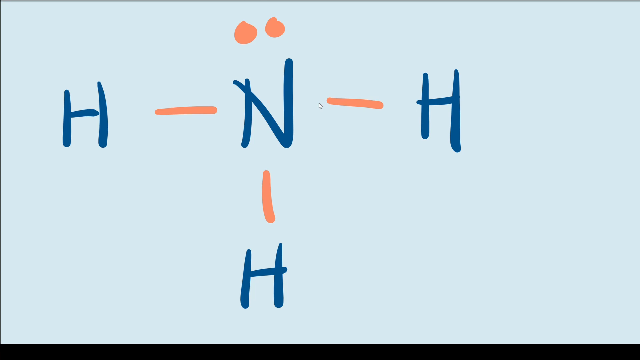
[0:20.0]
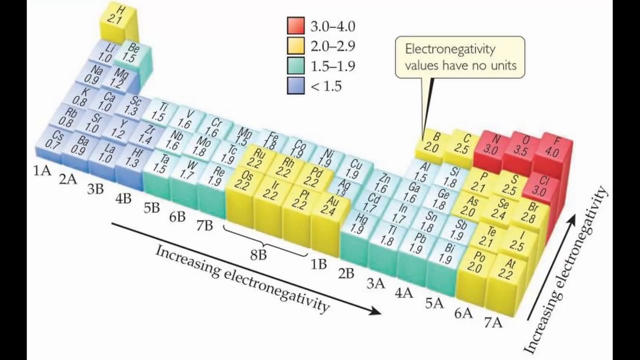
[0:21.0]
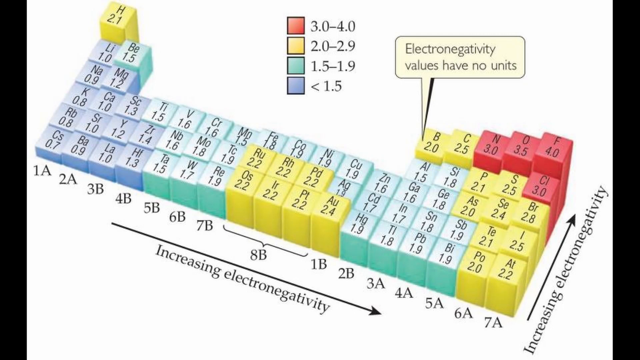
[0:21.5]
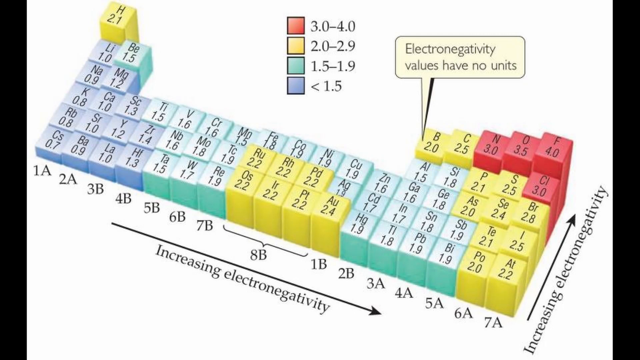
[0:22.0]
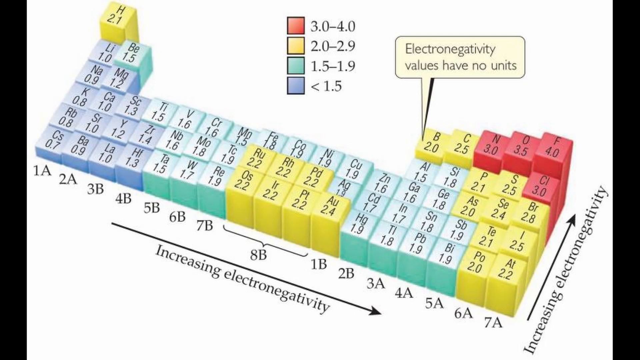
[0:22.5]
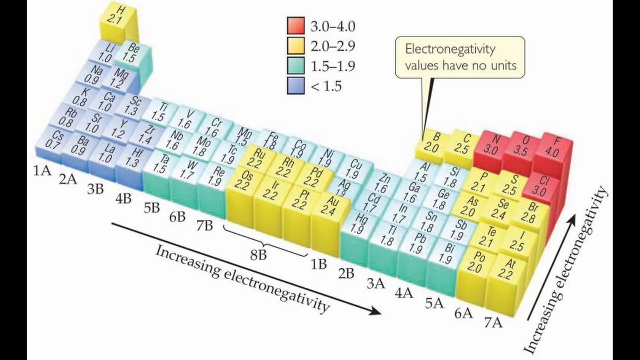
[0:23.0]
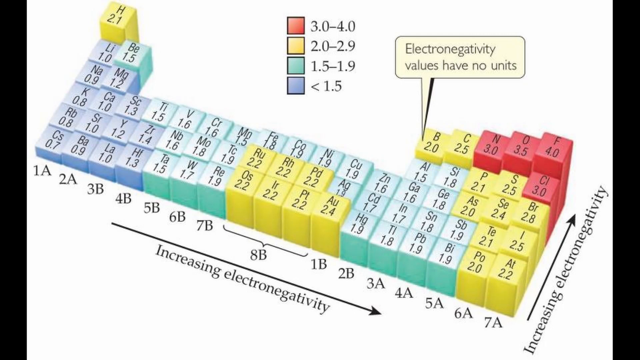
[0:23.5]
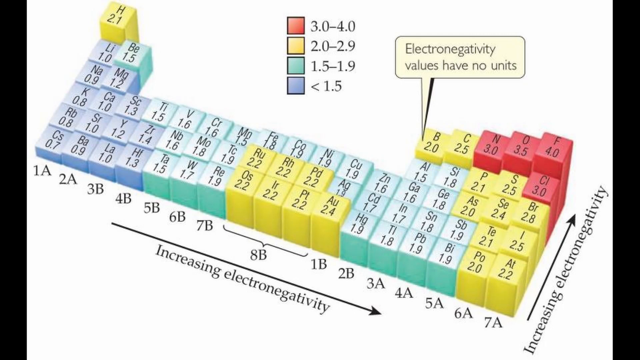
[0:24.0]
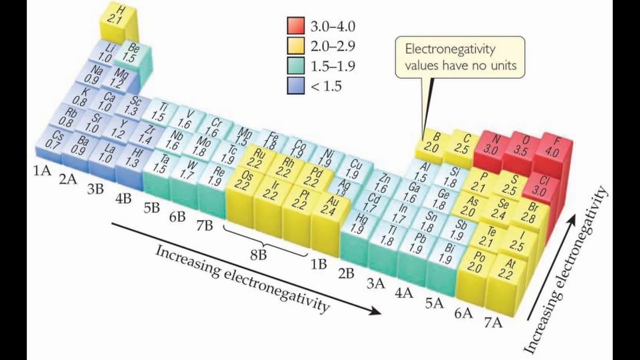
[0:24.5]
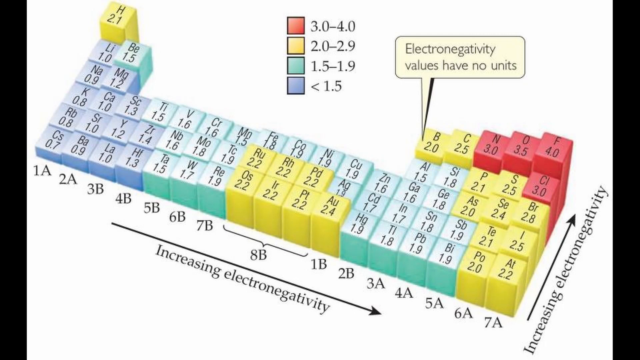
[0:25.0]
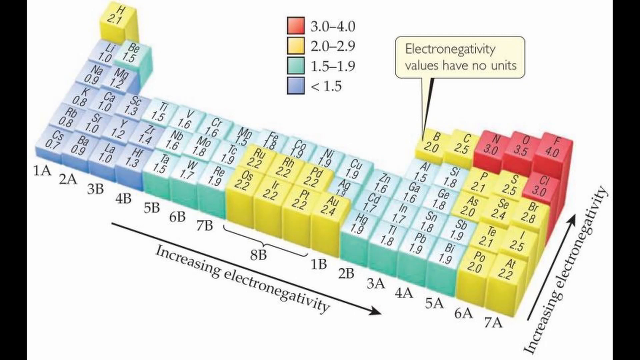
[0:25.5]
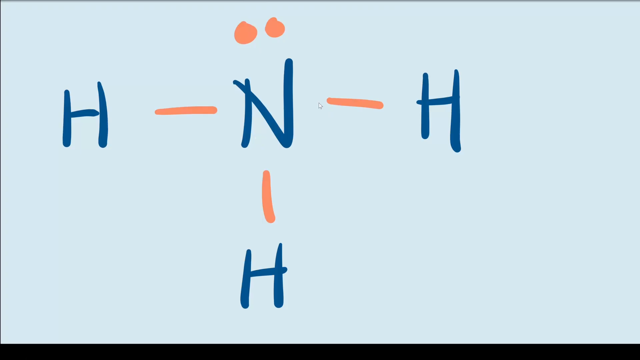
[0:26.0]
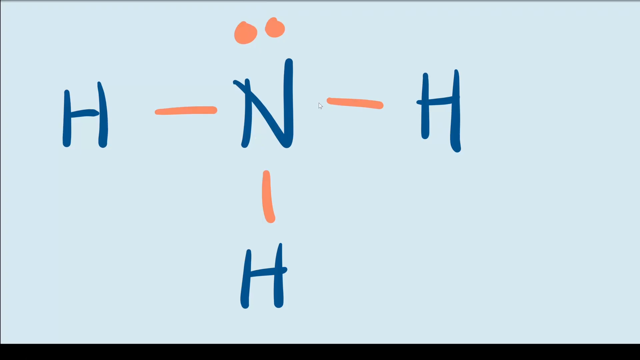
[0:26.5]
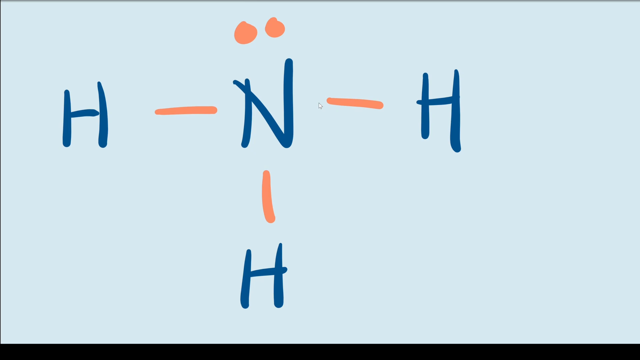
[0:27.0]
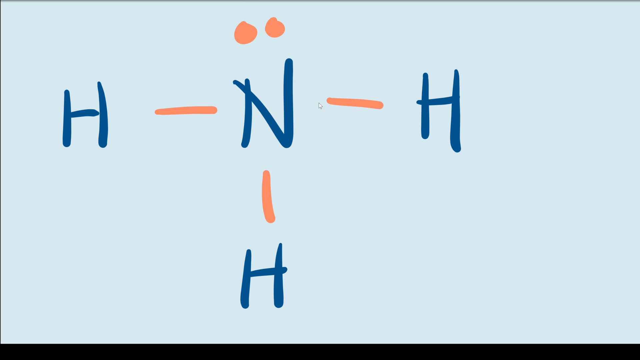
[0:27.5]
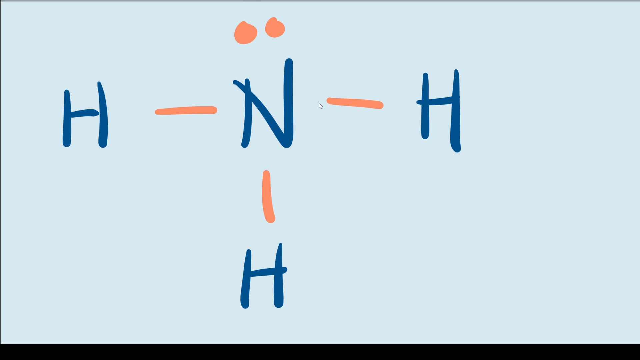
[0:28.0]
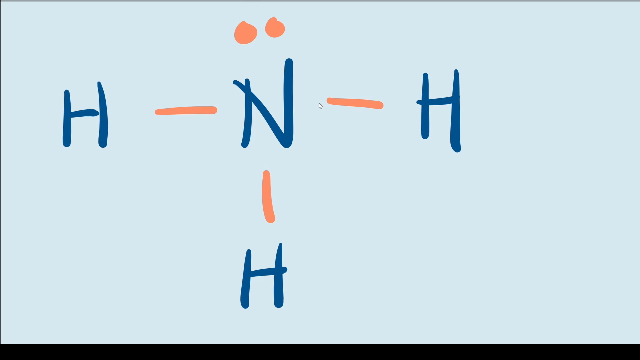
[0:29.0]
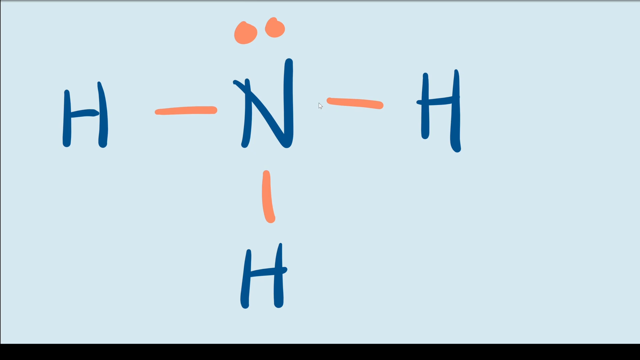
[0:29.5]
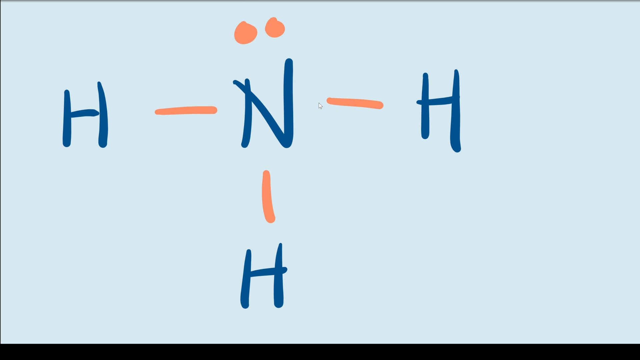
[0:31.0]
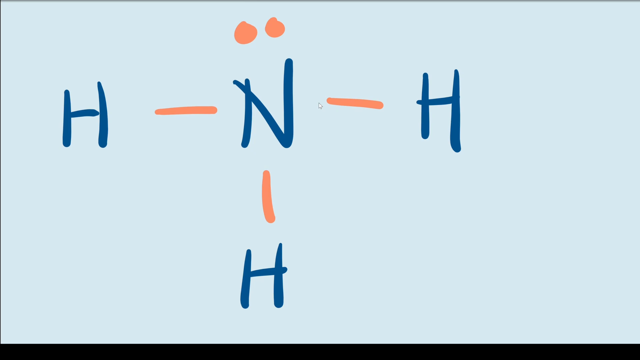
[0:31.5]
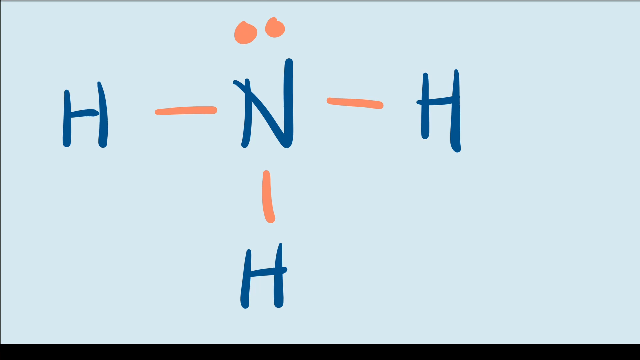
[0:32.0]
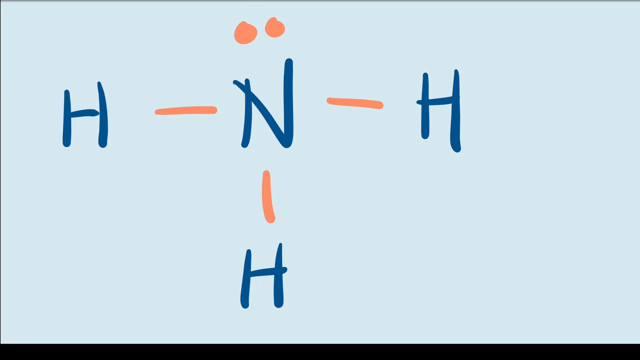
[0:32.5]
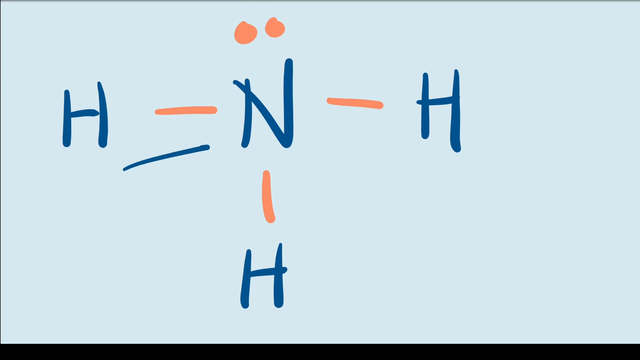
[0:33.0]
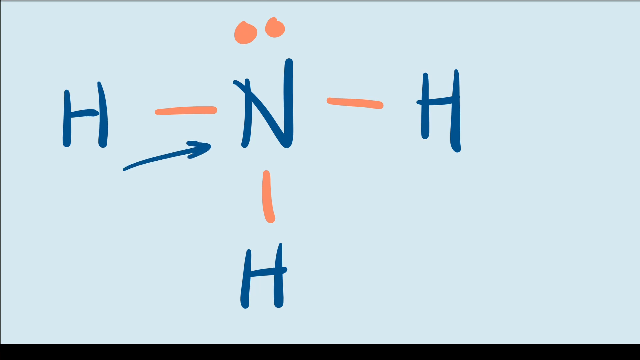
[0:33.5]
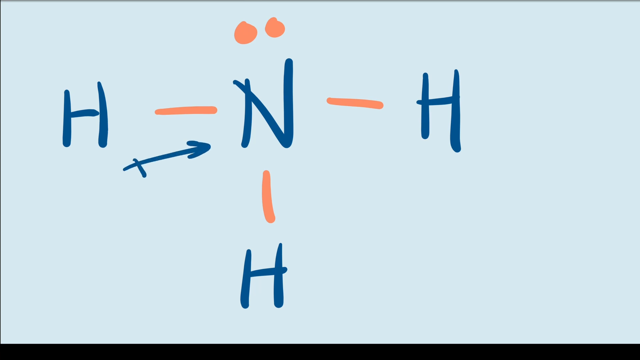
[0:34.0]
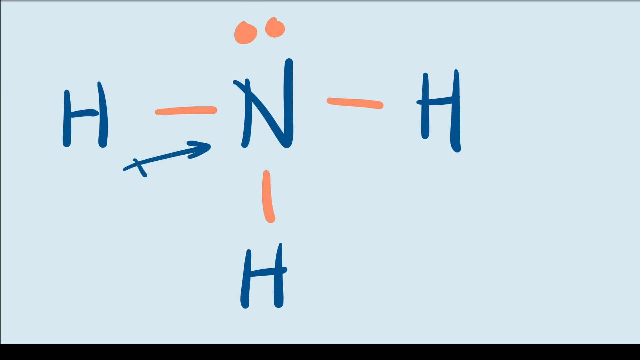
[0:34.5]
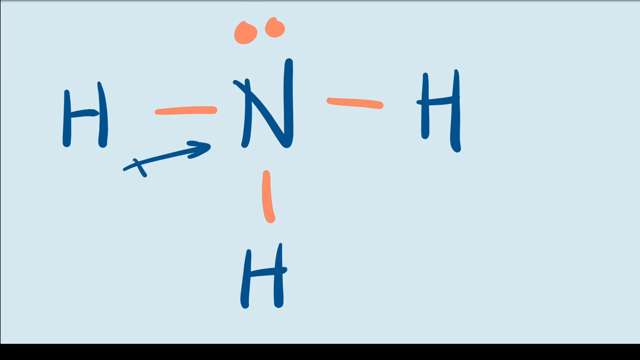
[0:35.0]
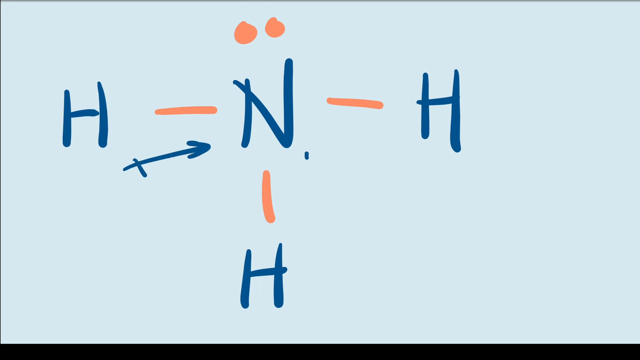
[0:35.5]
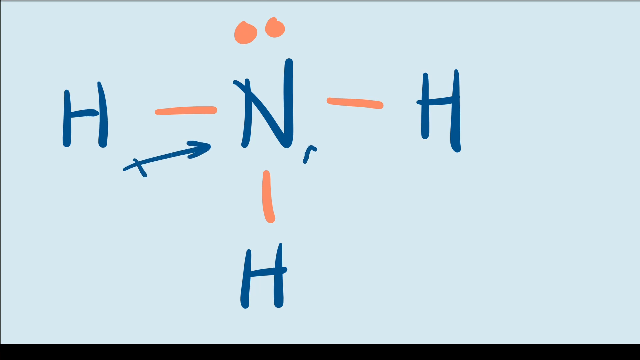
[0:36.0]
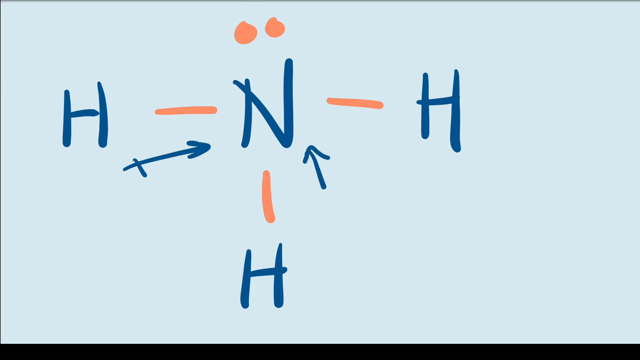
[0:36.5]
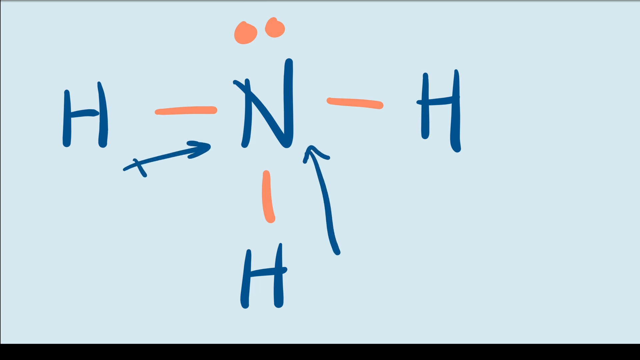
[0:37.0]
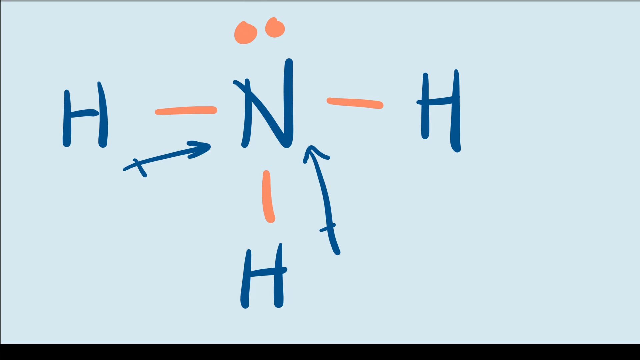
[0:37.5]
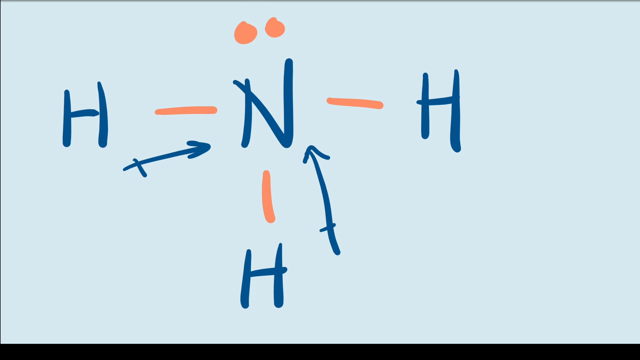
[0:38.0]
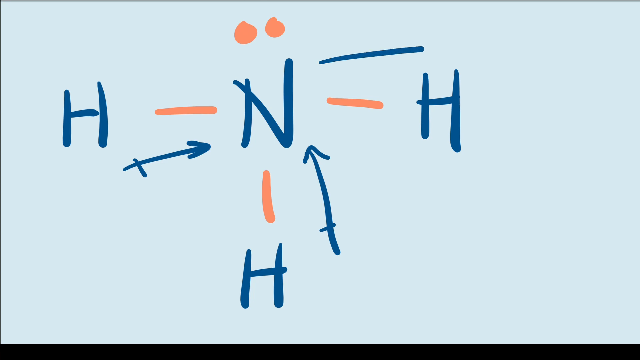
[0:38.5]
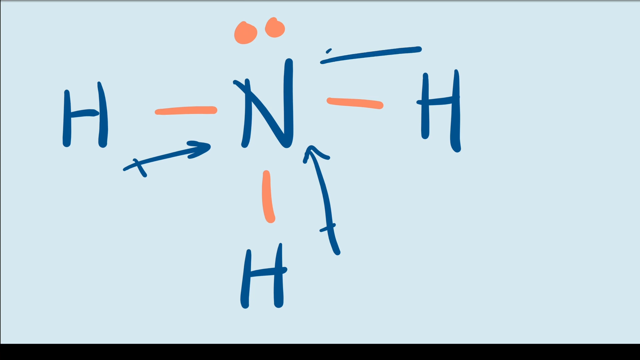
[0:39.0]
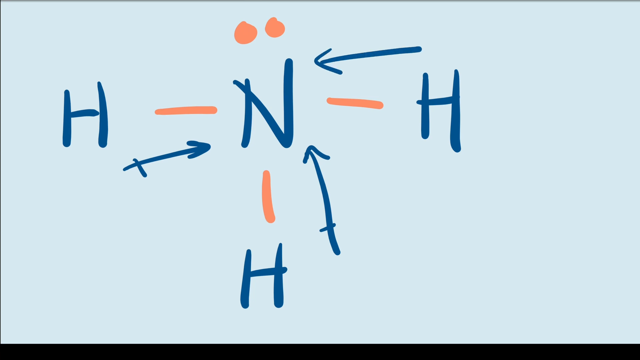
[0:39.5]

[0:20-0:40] The formula page continues, with the three H's and the N connected by orange lines. Then a periodic table appears; it looks to be a 3D, multicolored periodic table, apparently a stock image, color-coded in some way that is unclear, possibly by electronegativity. The diagram flashes quickly, and the video returns to the molecule diagram, where blue arrows are drawn toward the N: one on each side and a third at the top.